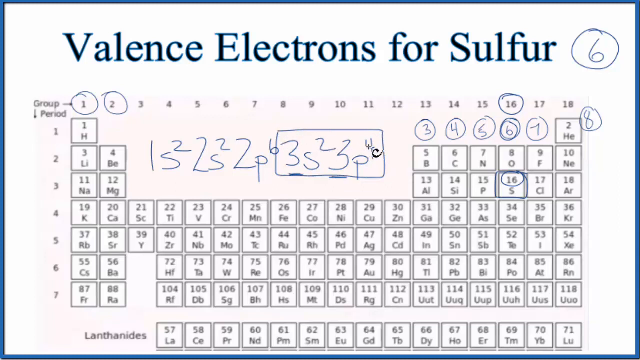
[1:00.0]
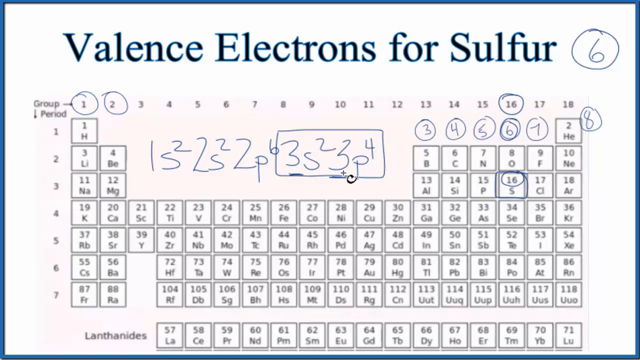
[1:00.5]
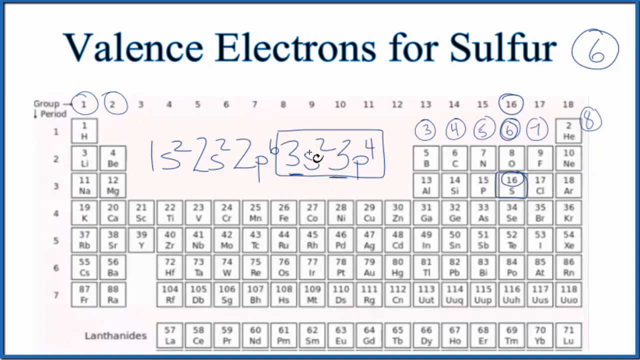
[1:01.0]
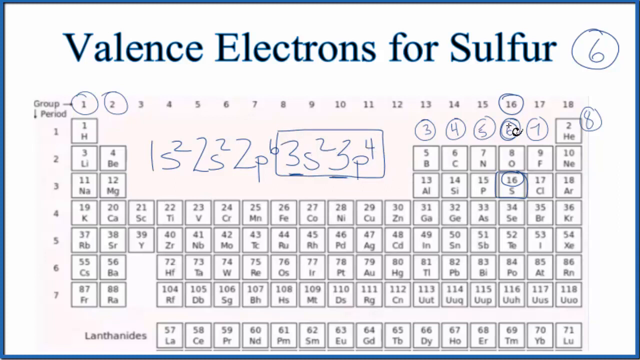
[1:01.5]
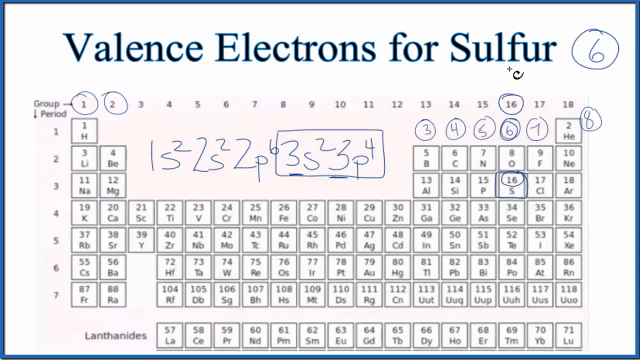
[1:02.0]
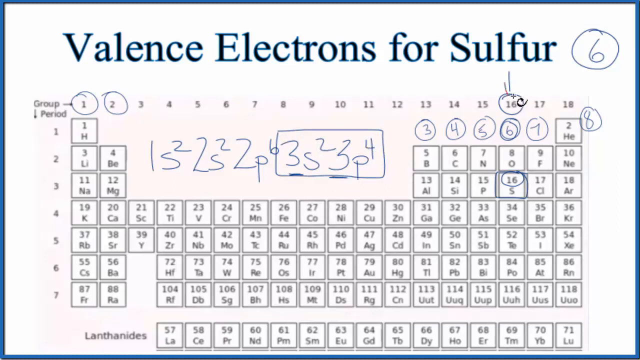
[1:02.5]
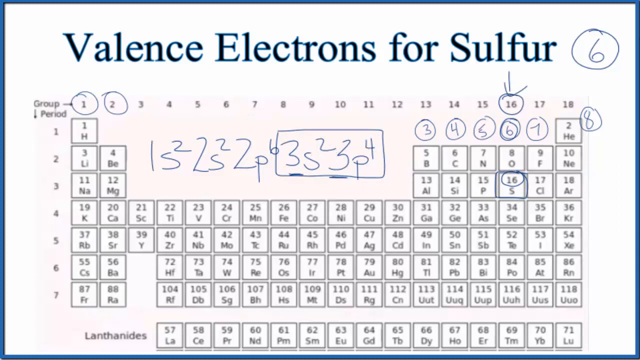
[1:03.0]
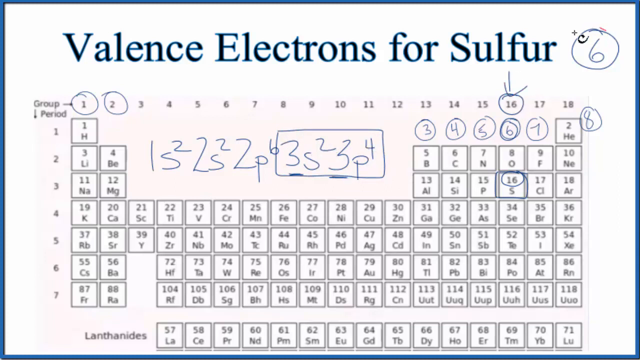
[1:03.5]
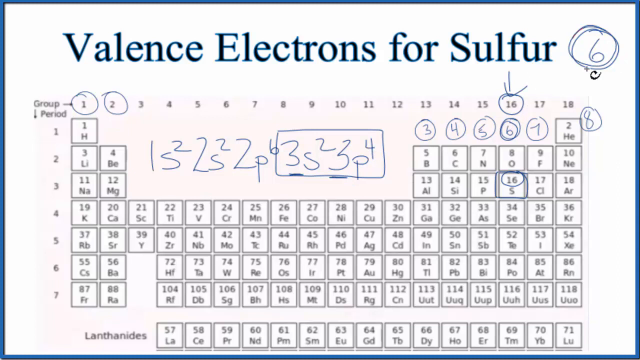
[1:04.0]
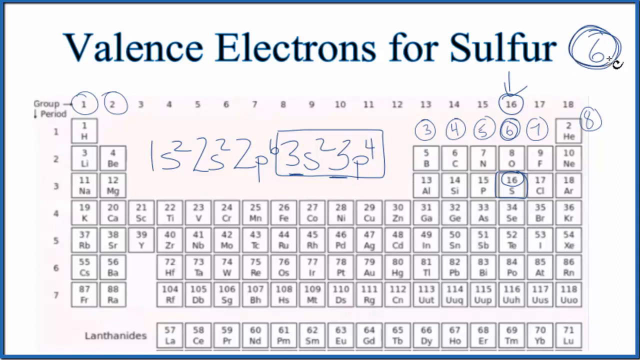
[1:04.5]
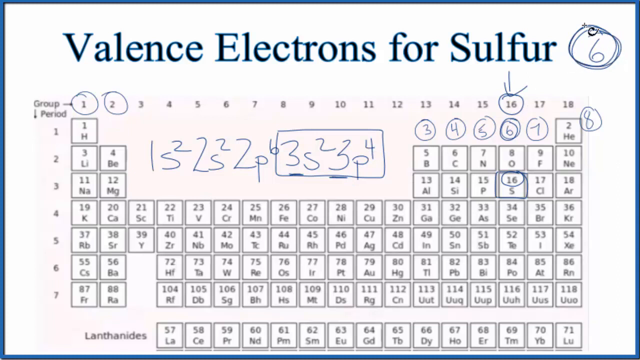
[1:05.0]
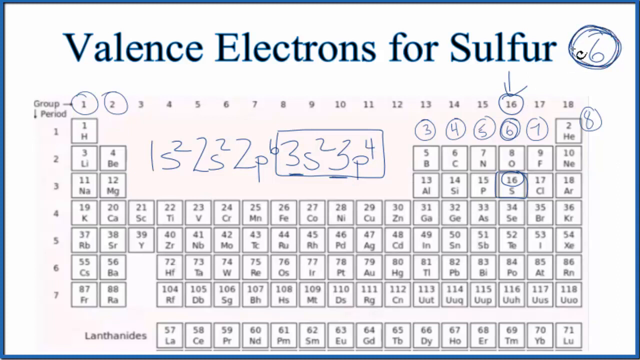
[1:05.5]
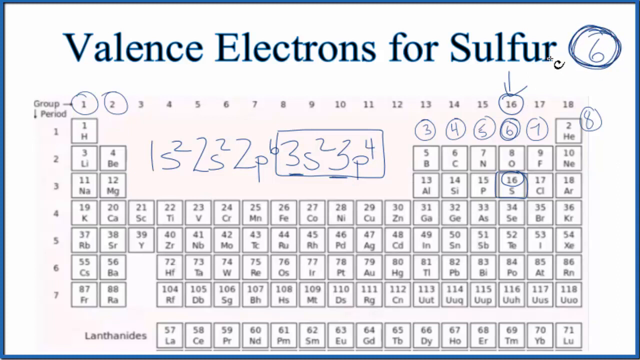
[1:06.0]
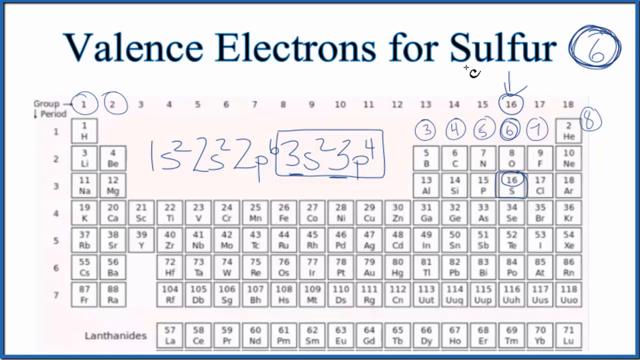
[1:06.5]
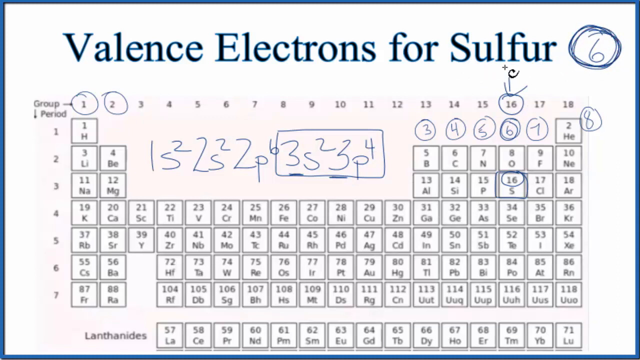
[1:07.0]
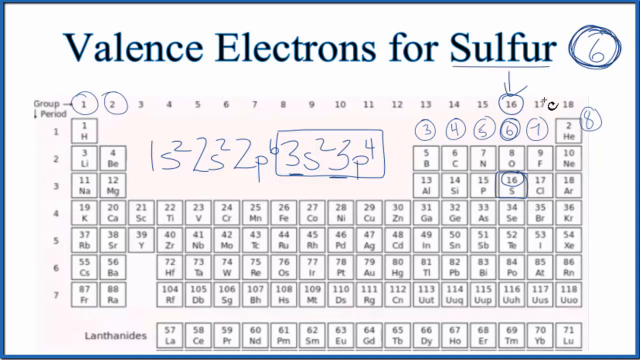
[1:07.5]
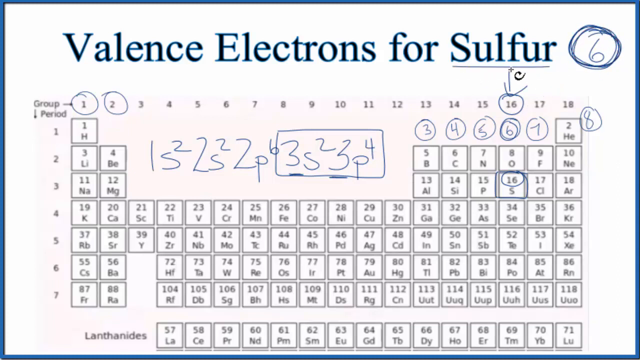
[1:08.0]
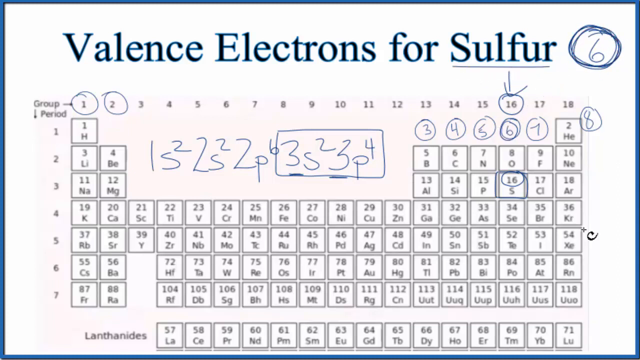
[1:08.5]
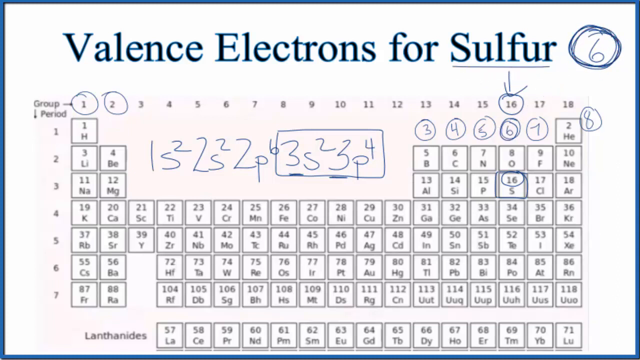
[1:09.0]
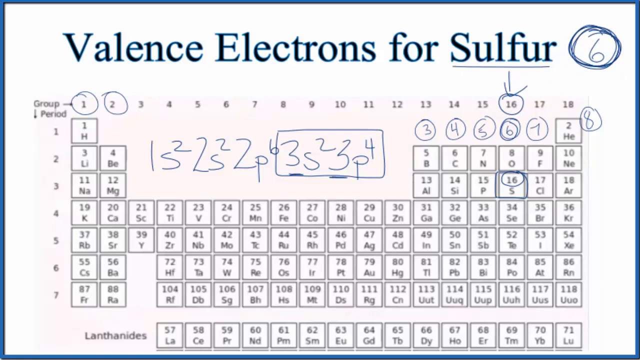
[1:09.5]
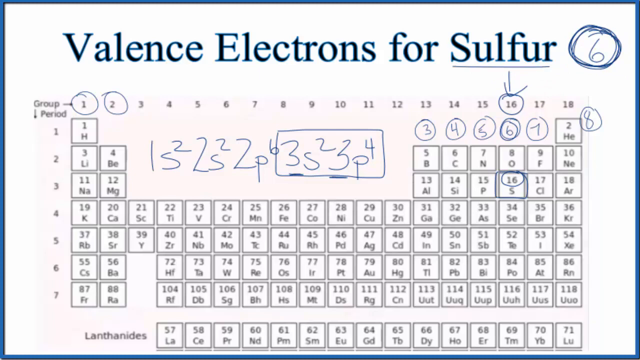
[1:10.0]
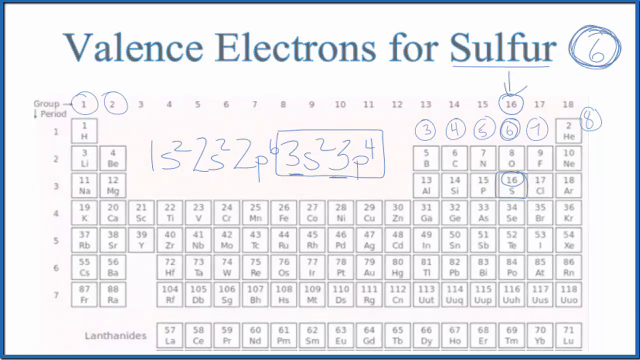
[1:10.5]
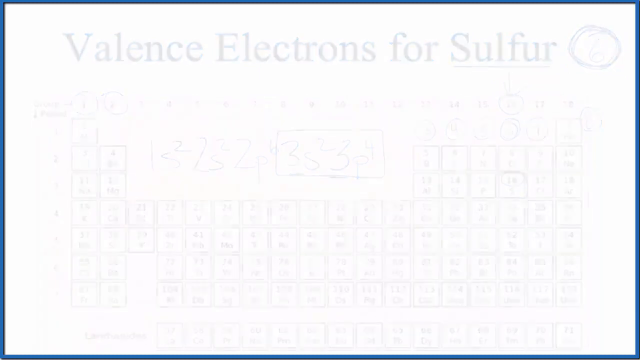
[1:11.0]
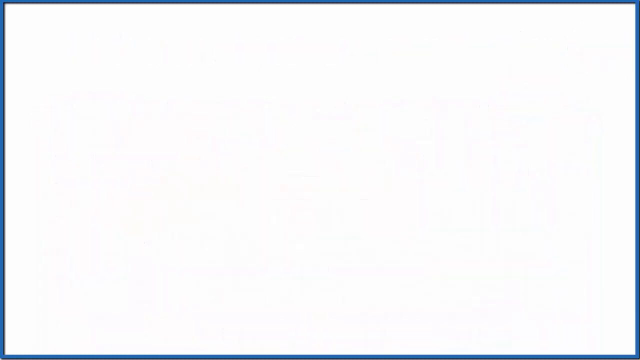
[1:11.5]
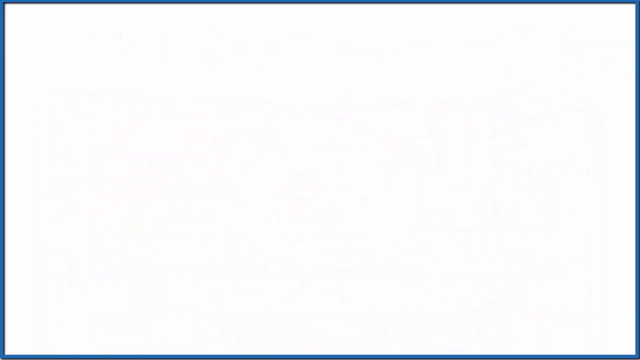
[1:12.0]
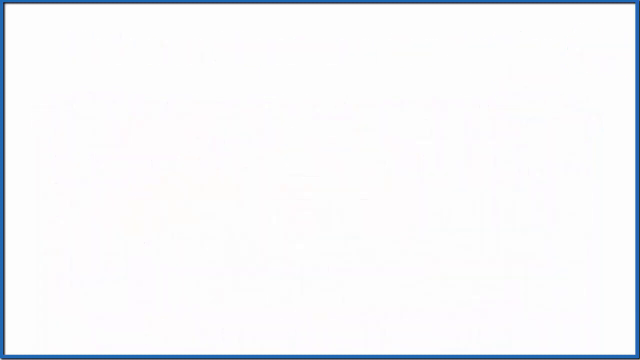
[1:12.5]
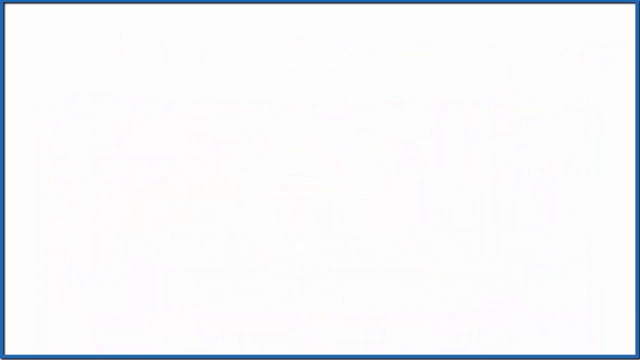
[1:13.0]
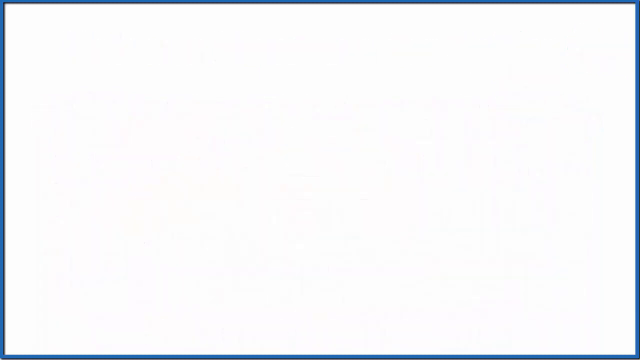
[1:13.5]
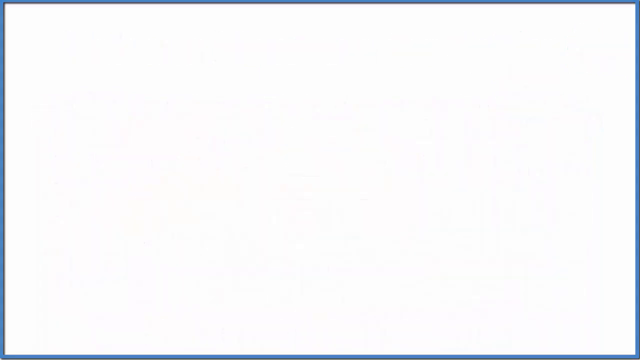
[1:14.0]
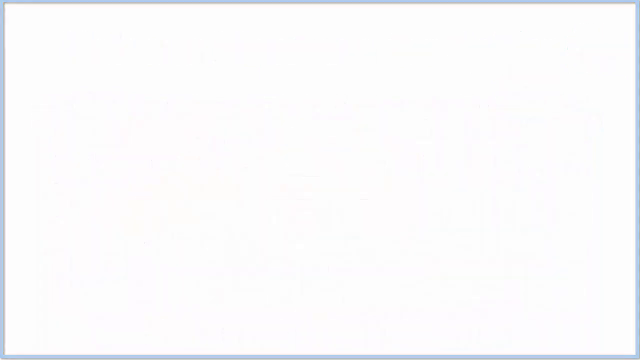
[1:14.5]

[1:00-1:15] The page about valence electrons for sulfur shows numbers circled with a pen and a written formula. The number six at the top is circled over and over, double, triple, four times, and the word "sulfur" is underlined. The page then cuts to a black page. The table has 18 columns across the top and seven rows, with an eighth down at the very bottom. The numbers one, two and sixteen at the top are circled, three, four, five, six, seven and eight have been written and circled, a six is drawn at the top and circled, and a written formula is in the middle.